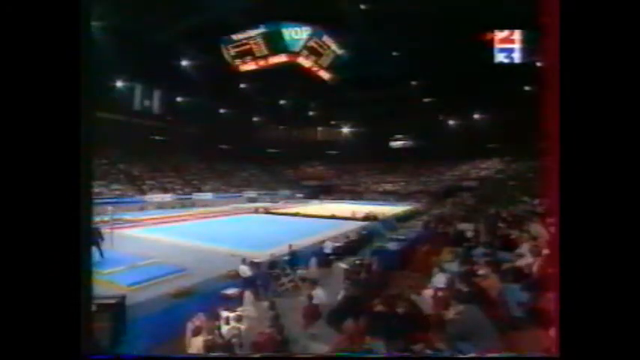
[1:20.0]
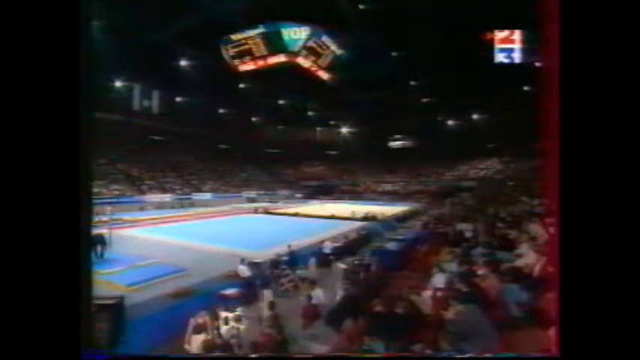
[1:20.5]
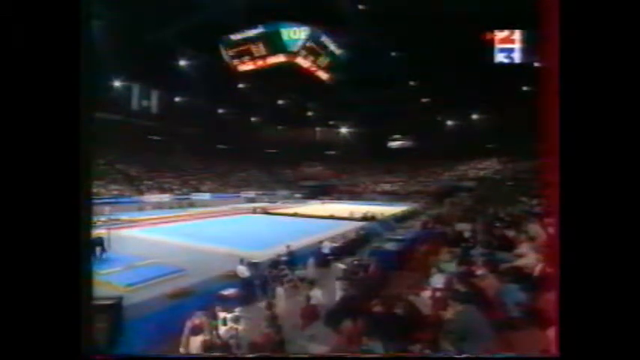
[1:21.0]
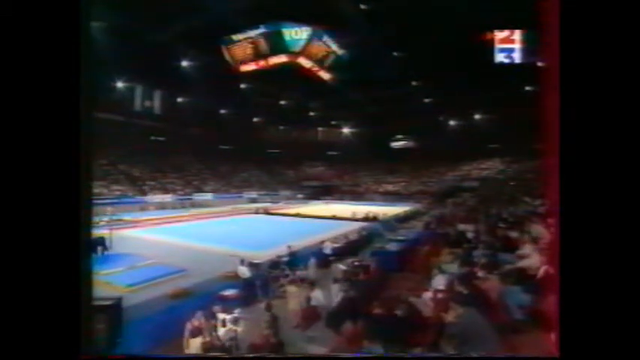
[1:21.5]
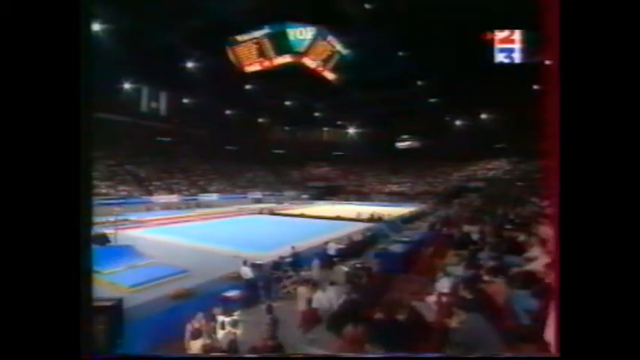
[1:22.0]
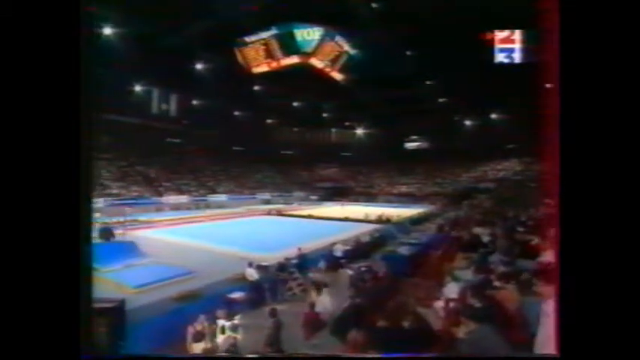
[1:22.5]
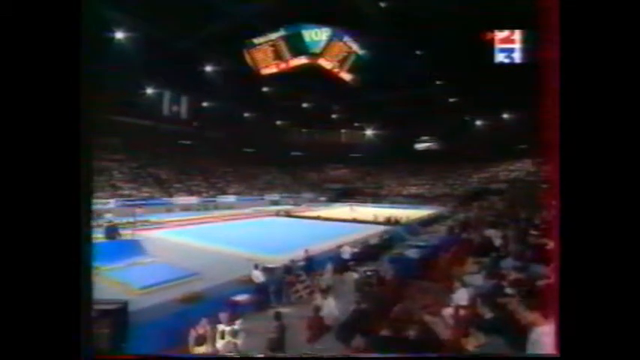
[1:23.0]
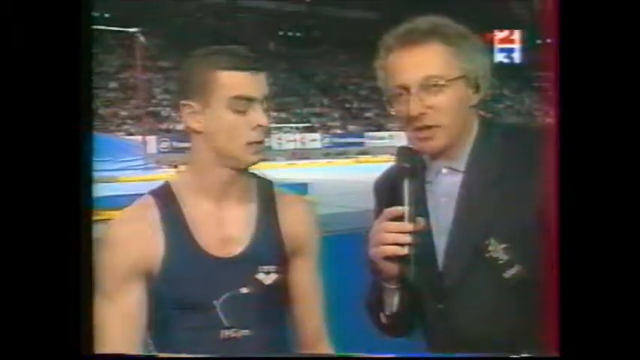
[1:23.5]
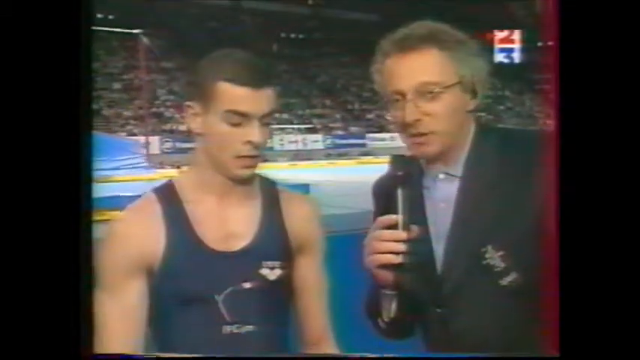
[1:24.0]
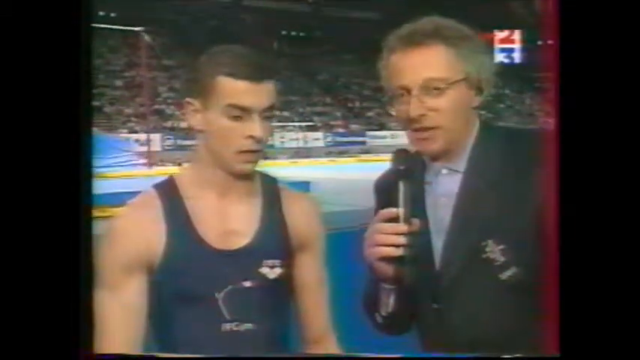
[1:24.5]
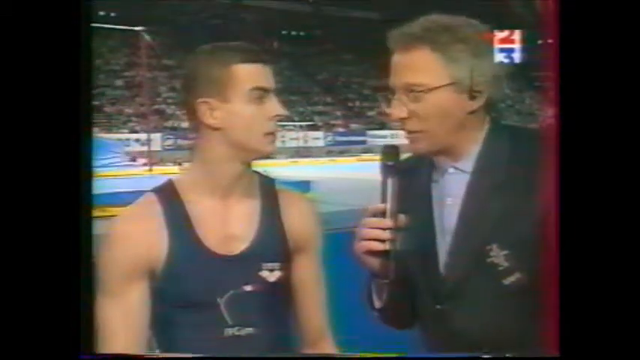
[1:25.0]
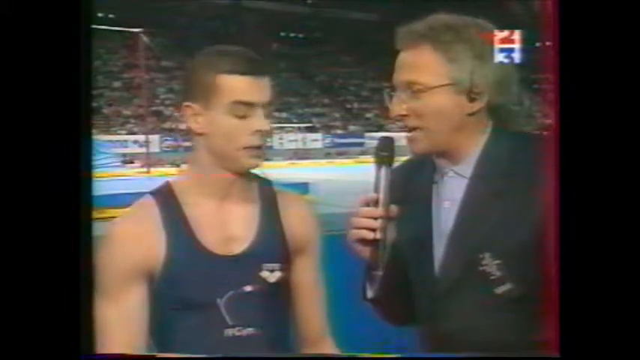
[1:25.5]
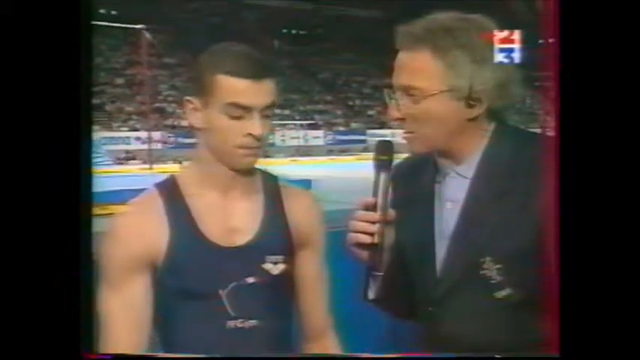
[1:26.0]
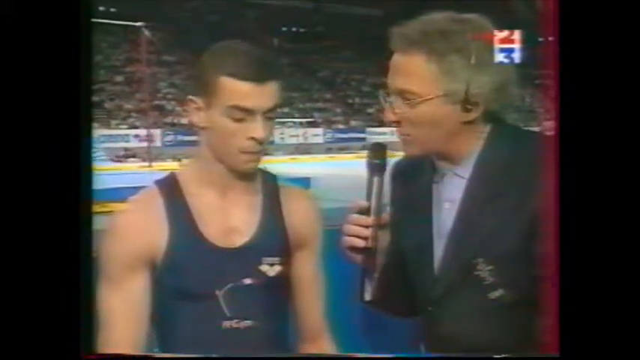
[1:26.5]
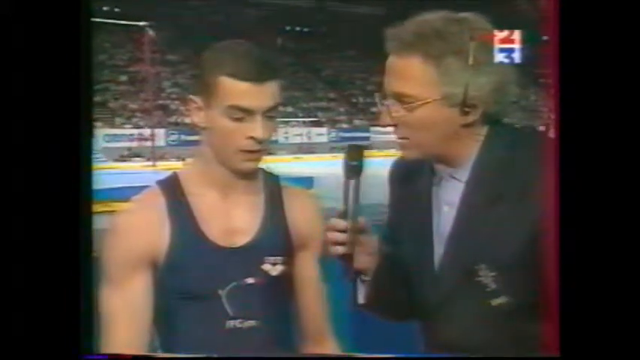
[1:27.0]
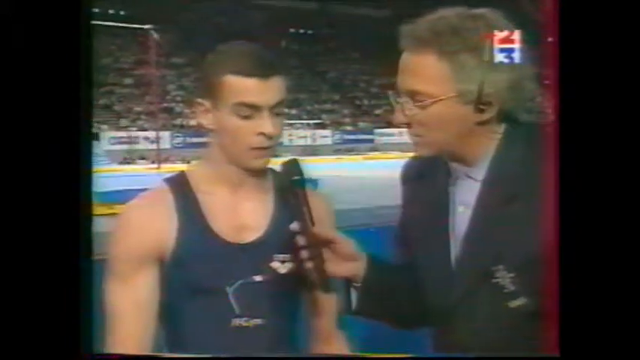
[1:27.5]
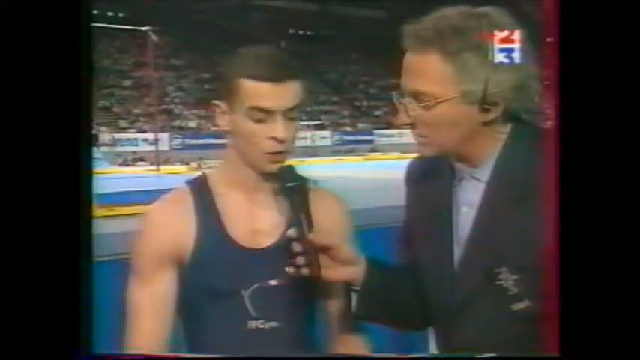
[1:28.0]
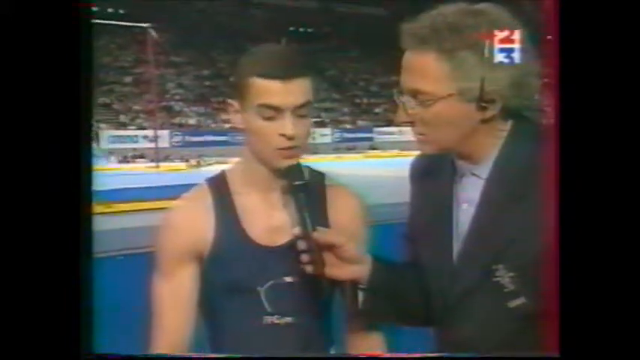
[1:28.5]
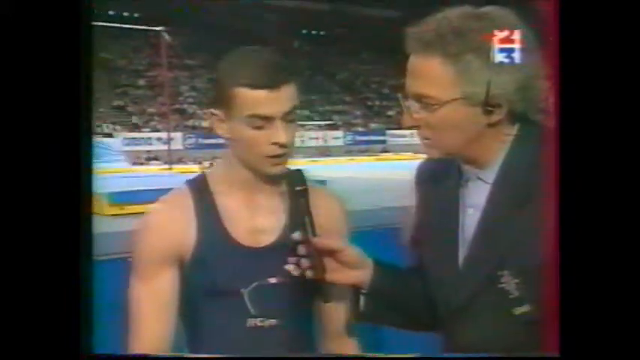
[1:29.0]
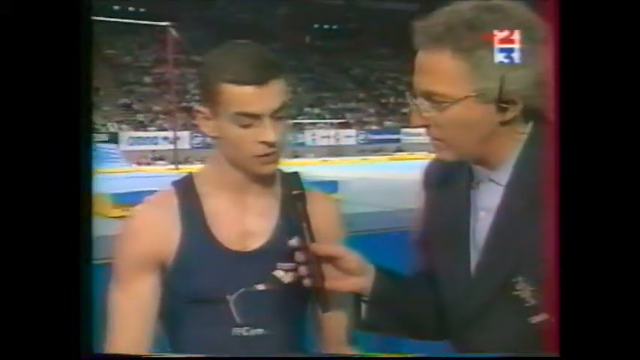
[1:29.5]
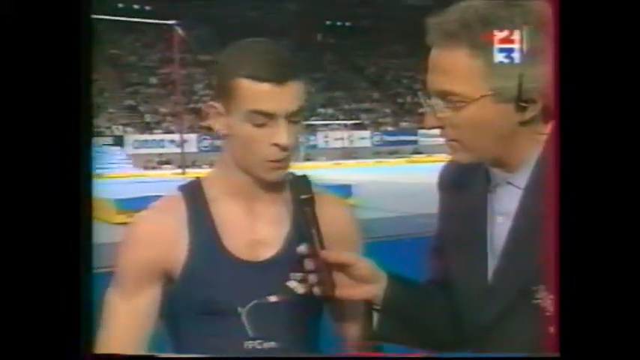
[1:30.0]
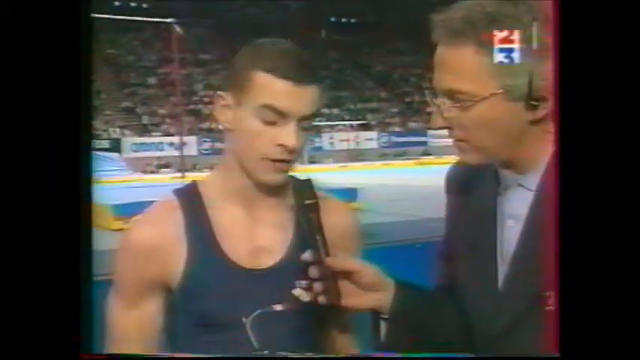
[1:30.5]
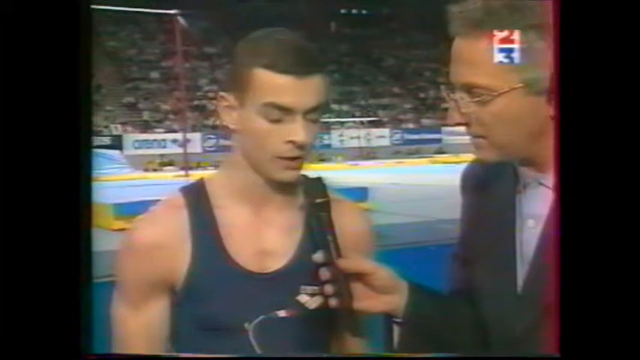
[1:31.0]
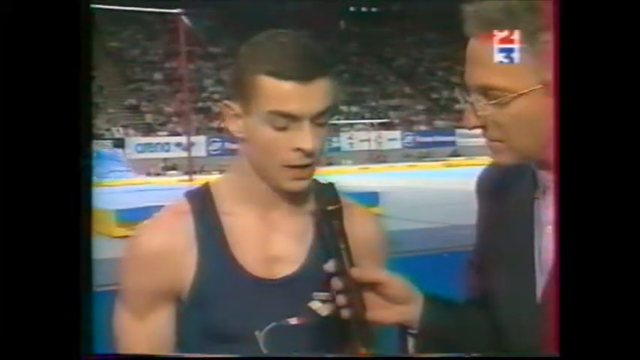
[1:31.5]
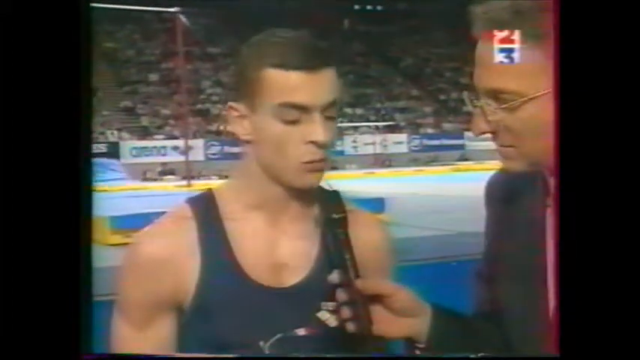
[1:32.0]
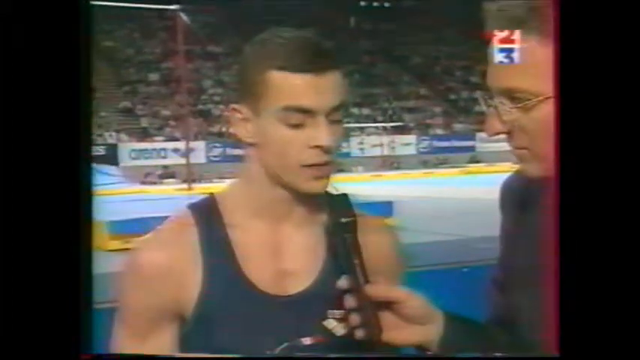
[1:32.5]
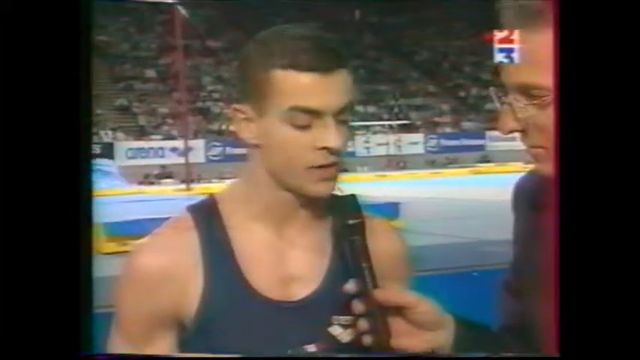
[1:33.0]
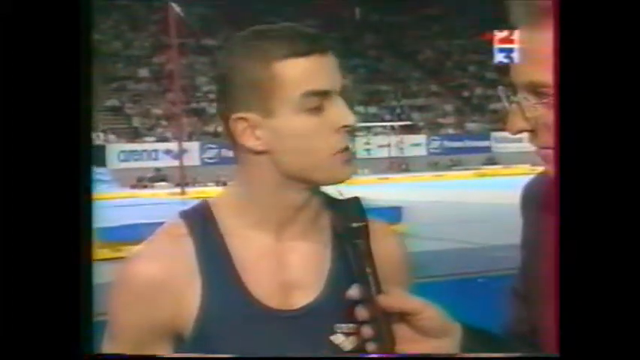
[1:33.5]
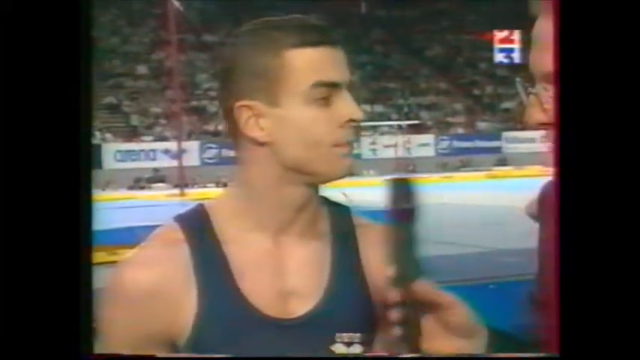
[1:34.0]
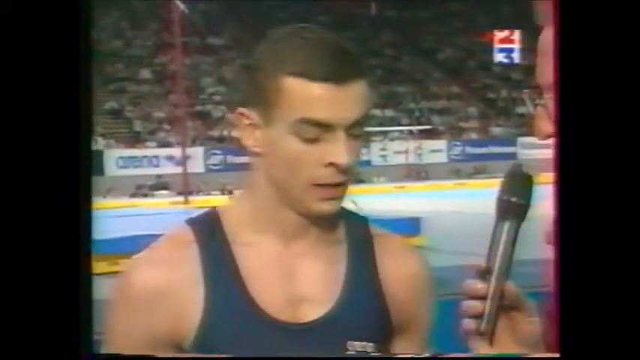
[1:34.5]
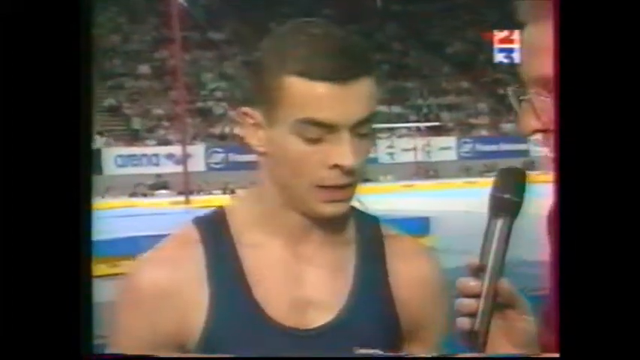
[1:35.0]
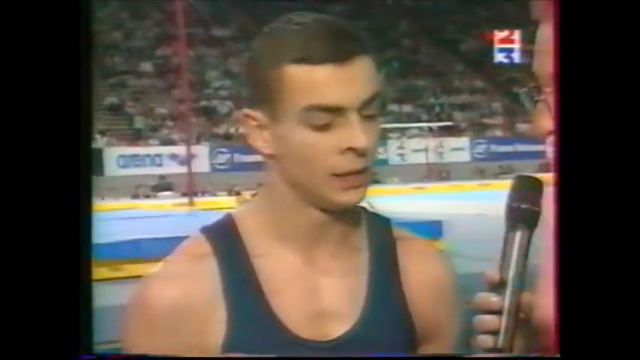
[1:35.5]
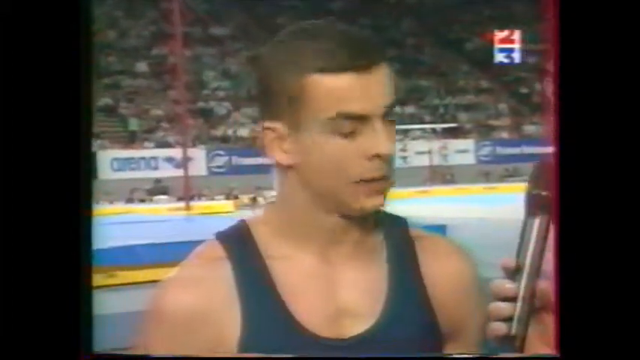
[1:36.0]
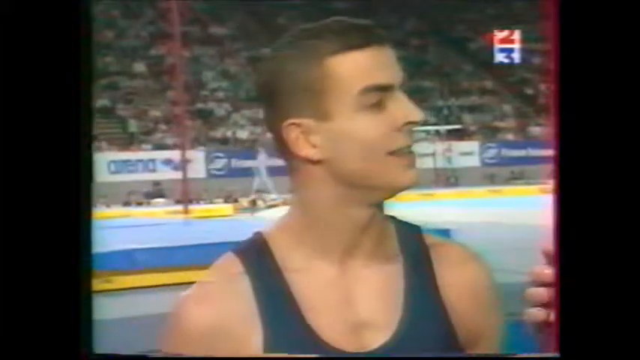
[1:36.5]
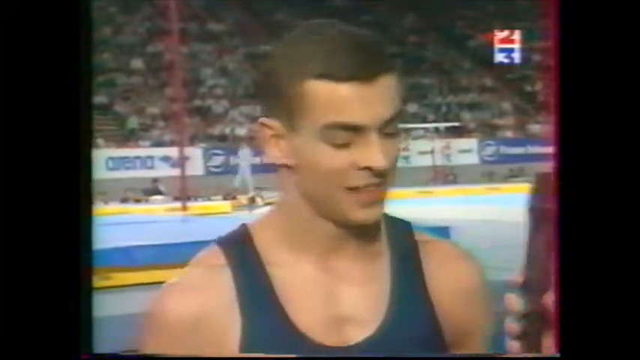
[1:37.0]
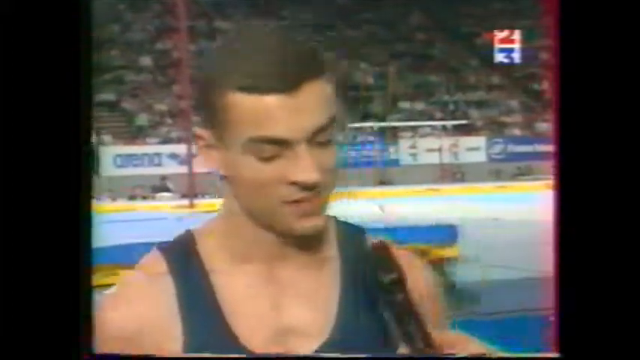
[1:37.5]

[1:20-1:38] The French male gymnast, having finished his routine, is interviewed. He is on the left of the screen, wearing a blue top that shows his arms, with short black hair and pale skin. On the right is a person with fuzzy grey hair and glasses who looks a bit older, wearing a suit with a blue shirt underneath and holding a microphone in the right hand. They turn to each other; the interviewer is also wearing a small headset. The interviewer passes the microphone to the athlete, who looks down while talking, moving his head side to side slightly, and eventually looks up and talks toward the interviewer on the right. The camera increasingly zooms in on the athlete's face until the interviewer can no longer be seen, only the microphone. Then a shot from above the gym floor shows an empty, lit-up space with a blue square and a sort of beige-white square, with nobody on it, and the stands around it.